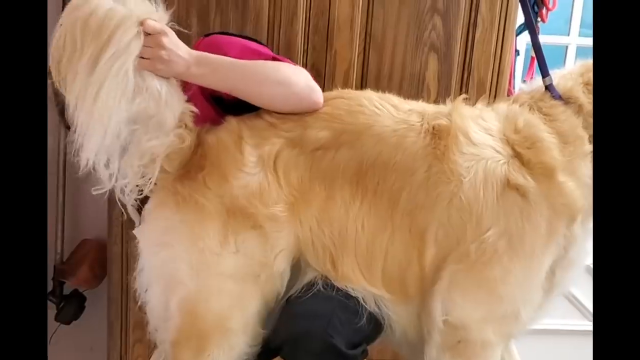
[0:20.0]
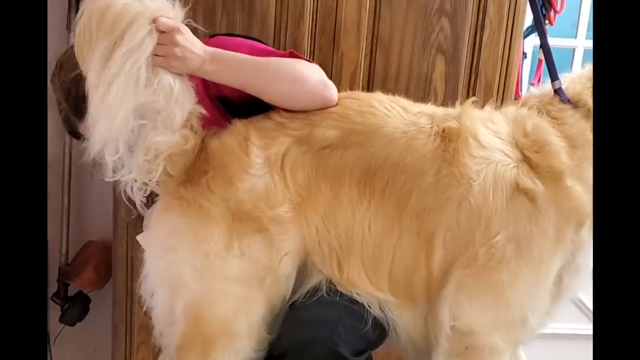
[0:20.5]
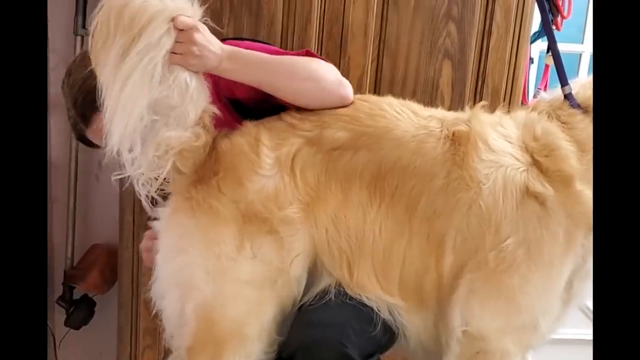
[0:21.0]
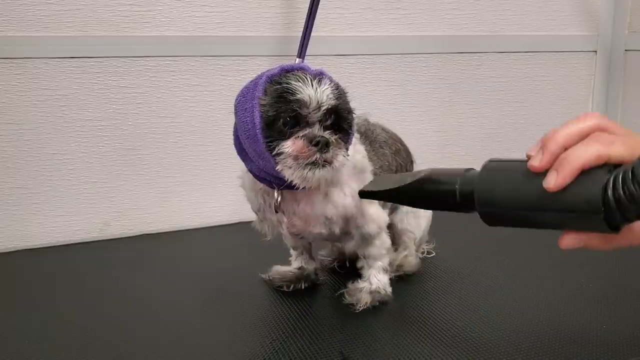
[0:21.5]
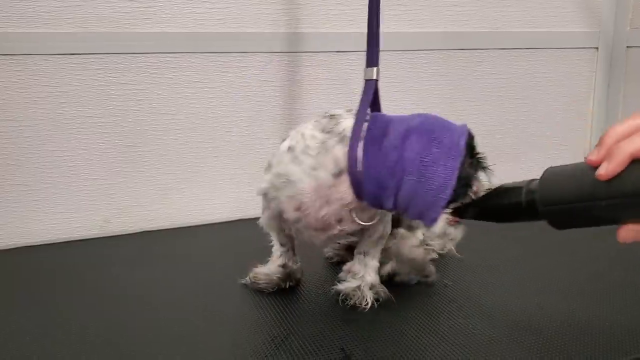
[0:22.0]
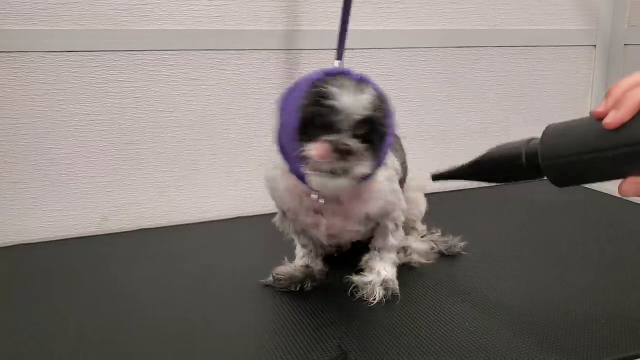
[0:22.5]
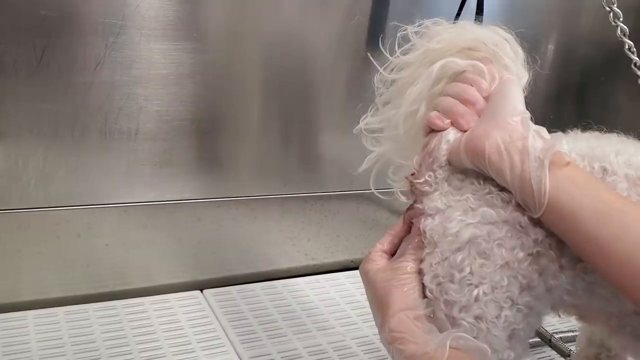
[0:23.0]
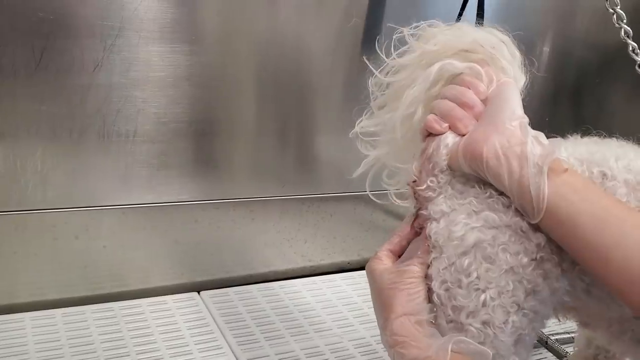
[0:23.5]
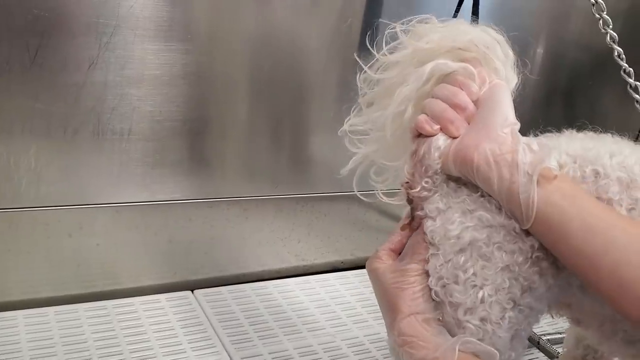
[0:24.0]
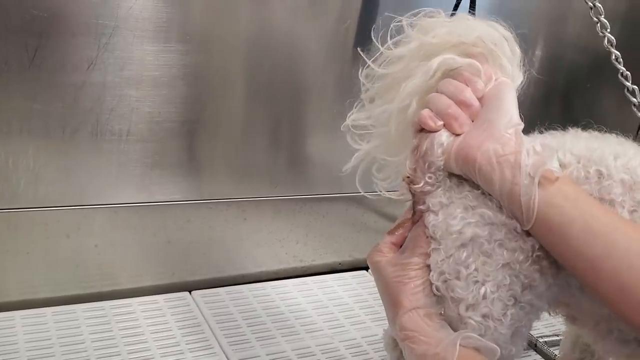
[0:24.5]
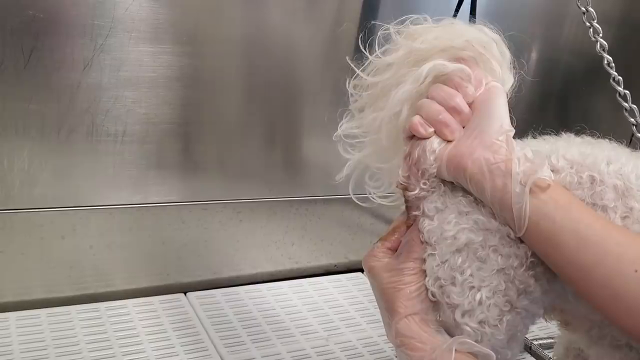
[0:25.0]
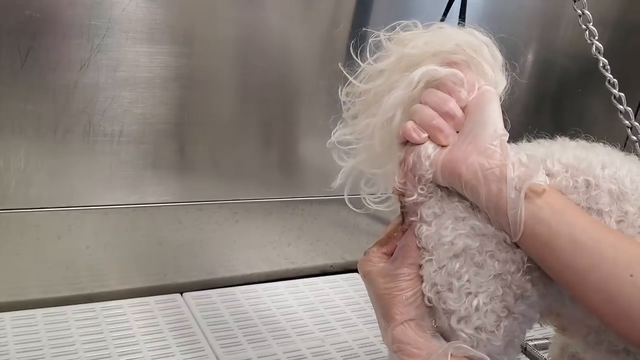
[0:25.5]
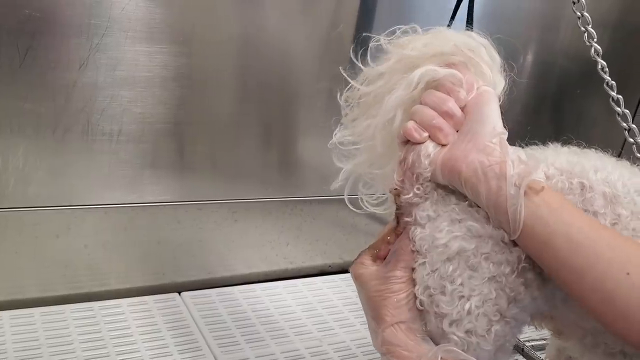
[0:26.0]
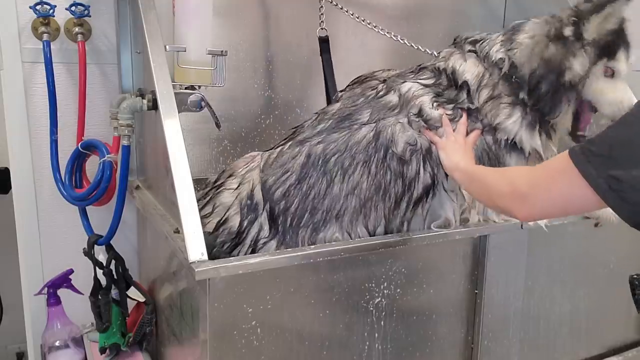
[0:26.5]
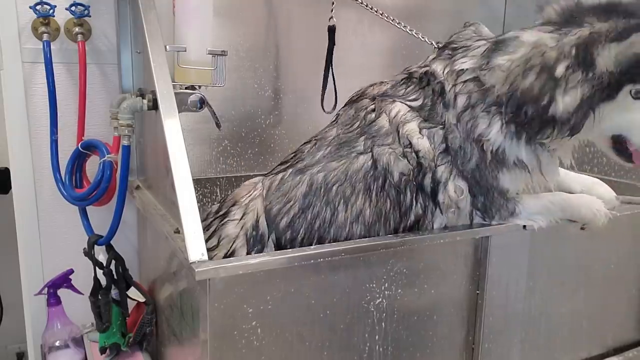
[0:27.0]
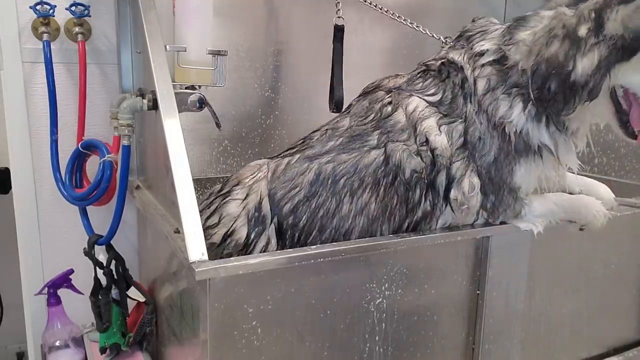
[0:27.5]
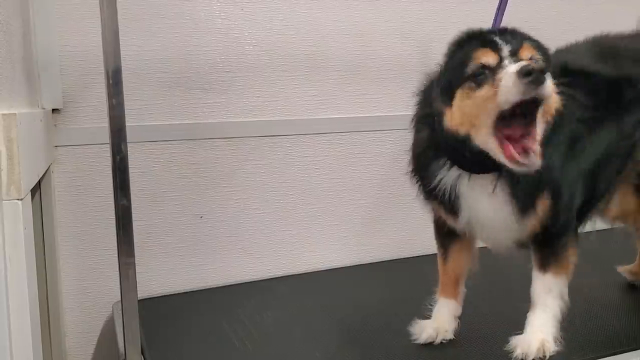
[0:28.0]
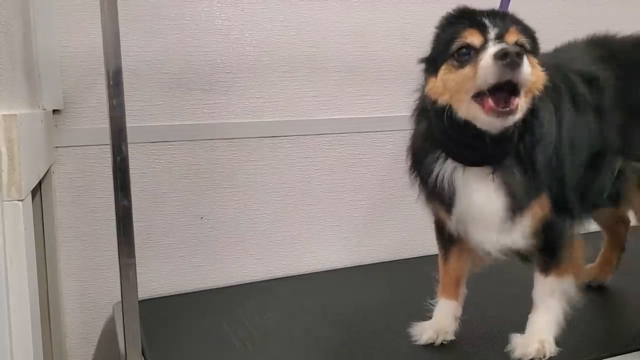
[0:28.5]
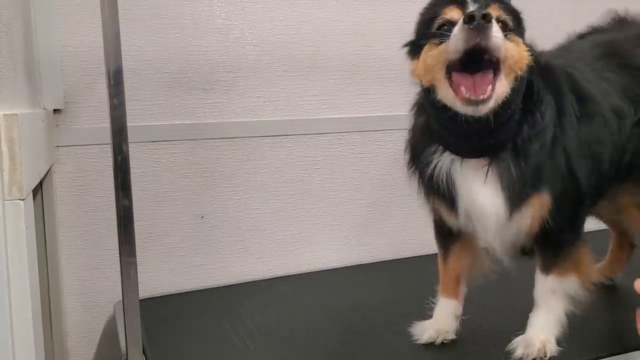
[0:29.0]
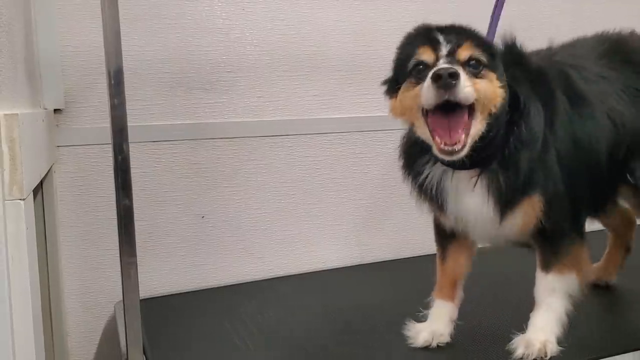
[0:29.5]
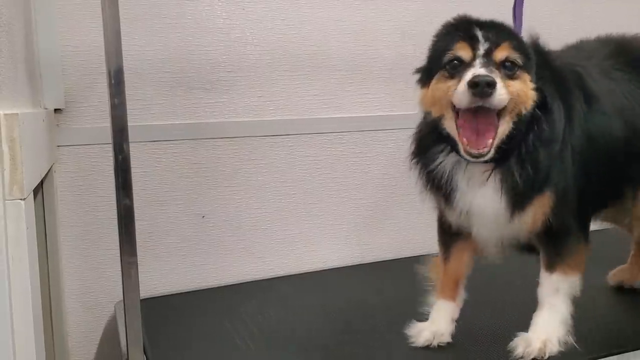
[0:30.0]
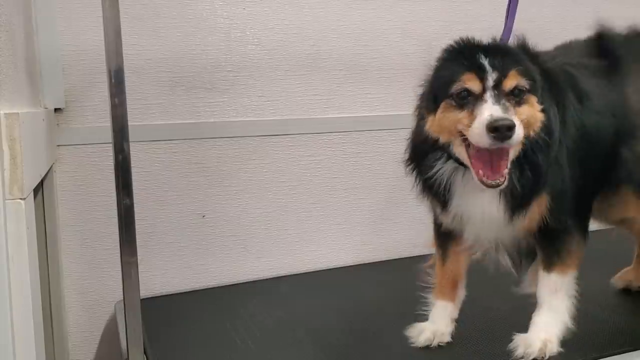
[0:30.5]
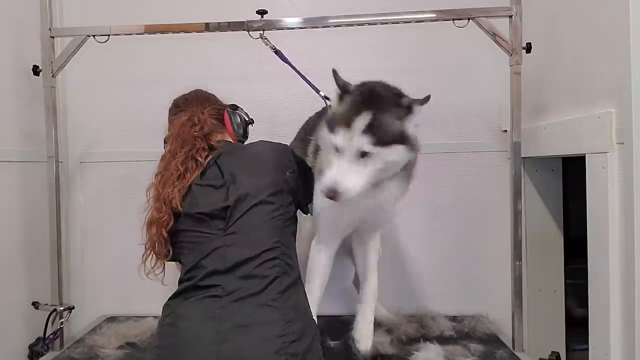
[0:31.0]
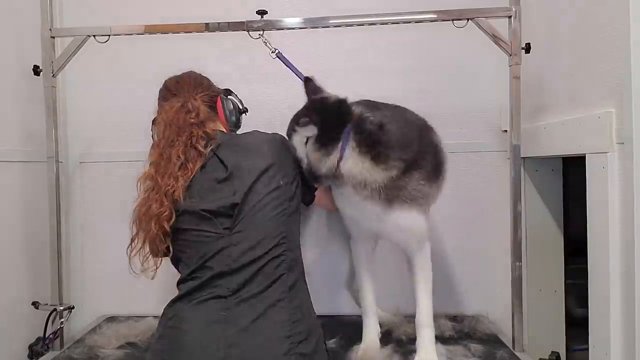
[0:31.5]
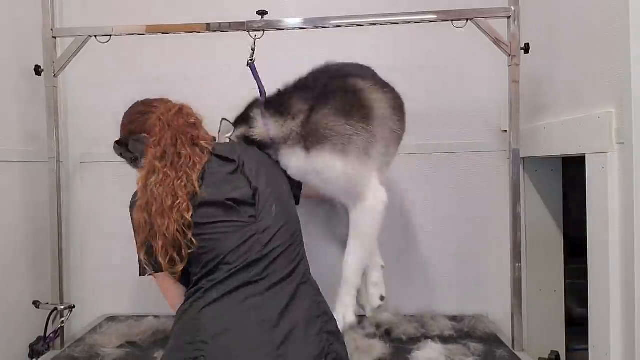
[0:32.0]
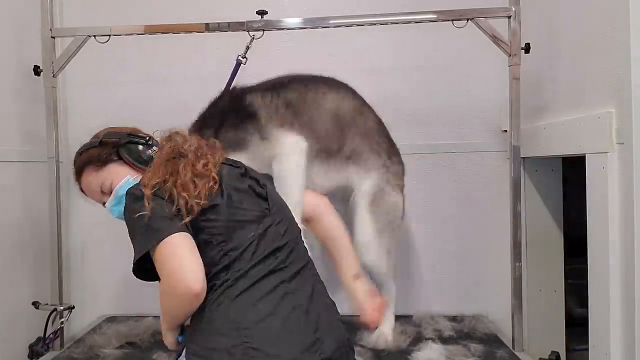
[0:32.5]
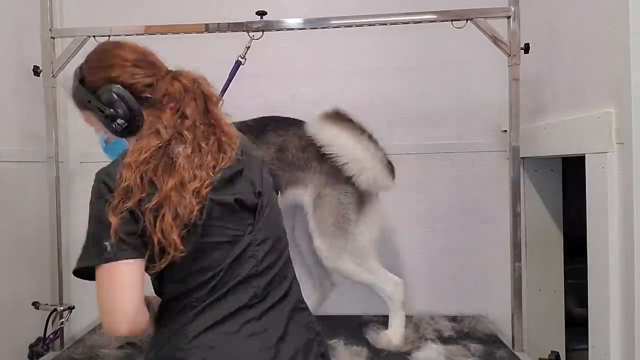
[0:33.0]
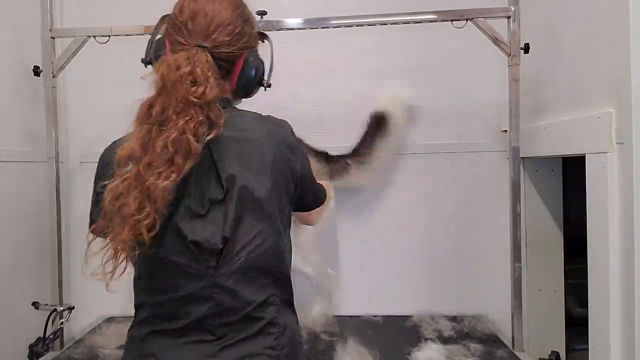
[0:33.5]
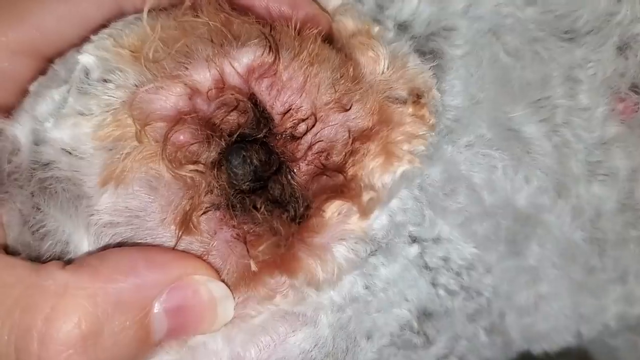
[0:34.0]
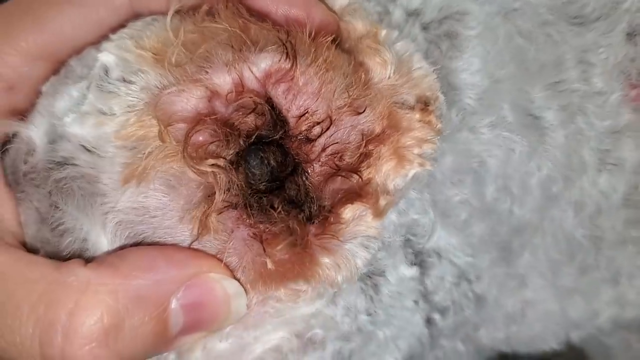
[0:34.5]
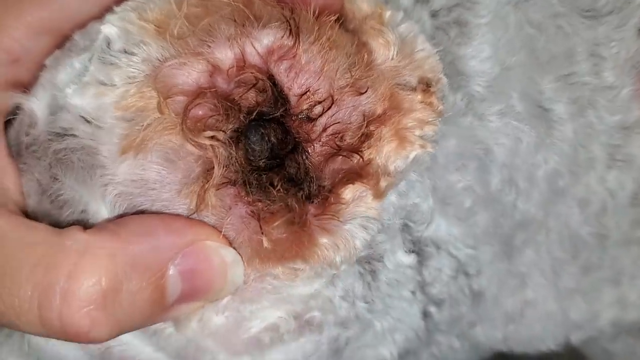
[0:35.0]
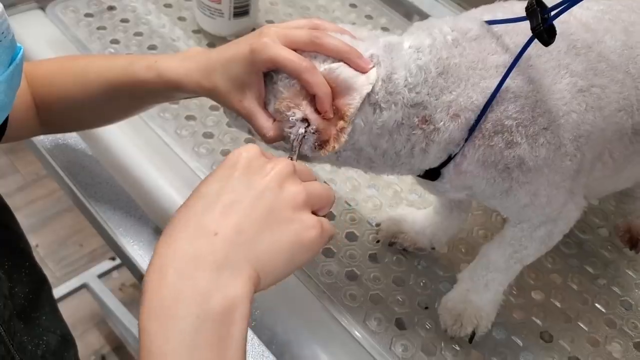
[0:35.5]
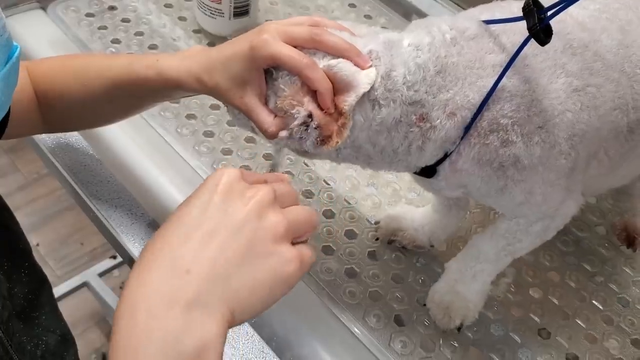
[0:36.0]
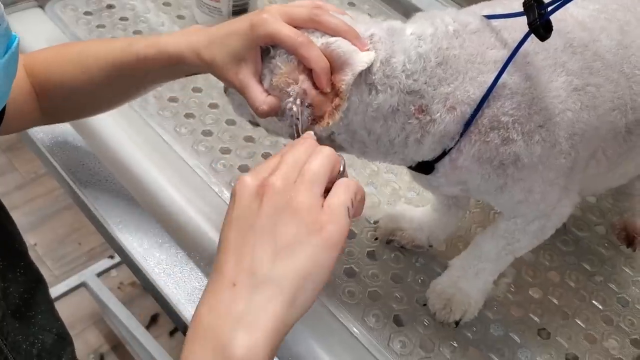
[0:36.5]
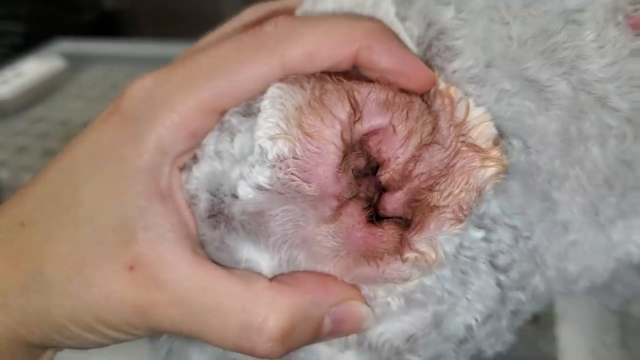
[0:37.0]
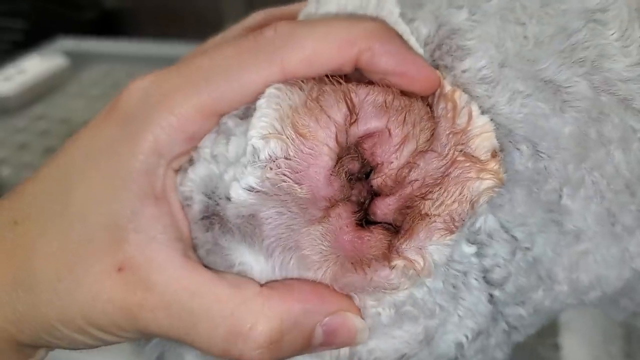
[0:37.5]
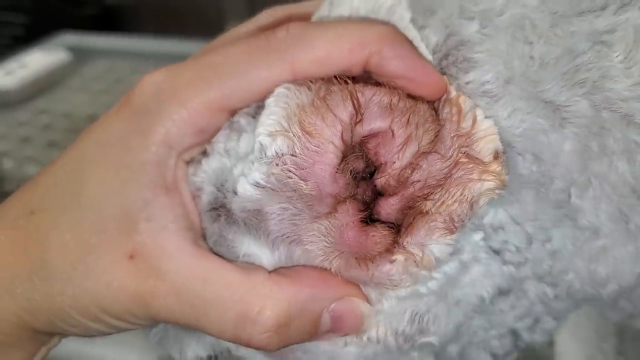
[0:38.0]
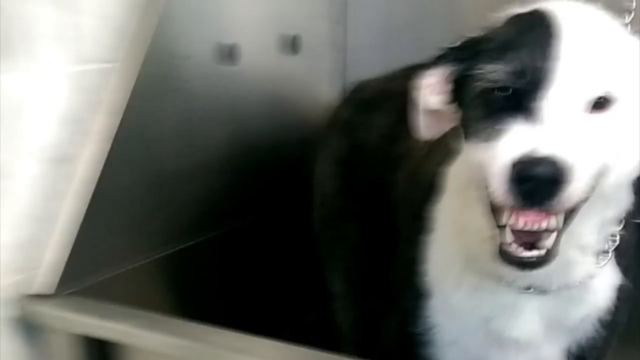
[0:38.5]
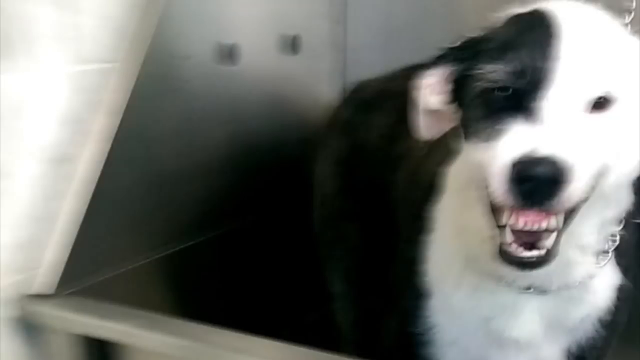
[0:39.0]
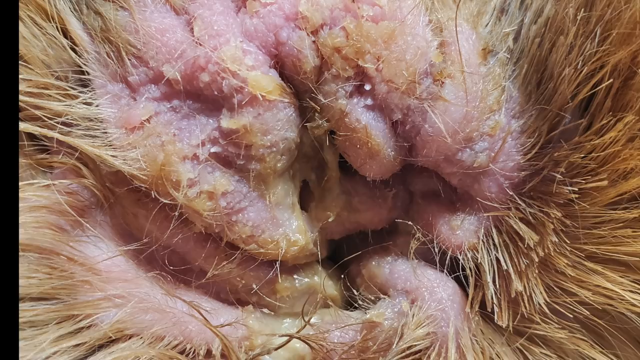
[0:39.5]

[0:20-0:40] Two female pet groomers, one in a magenta top and one in a blue top, groom different types of dogs, both little and big. Some of the dogs lie down as they are groomed, some sit up, and they look content. Then a different set of dogs, some big and some small, react differently to the grooming; they are apparently not in pain or being abused, but bark or bare their teeth, seemingly because they are excited and do not know how to react. Among them are huskies and small chihuahuas, all with varying reactions.